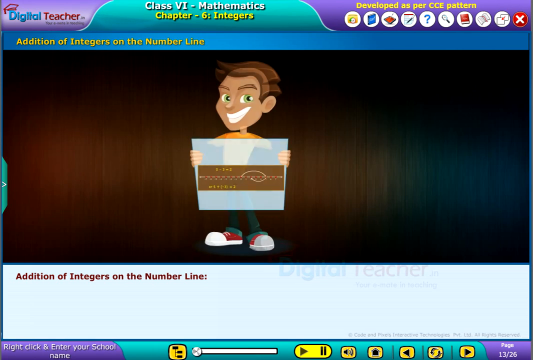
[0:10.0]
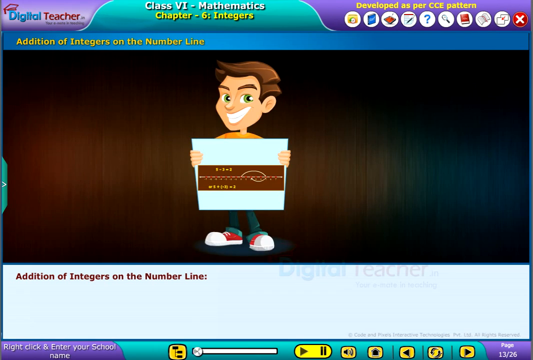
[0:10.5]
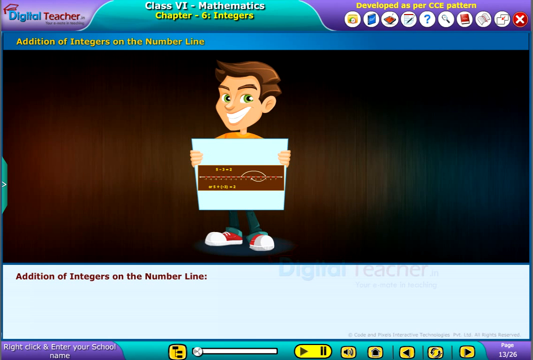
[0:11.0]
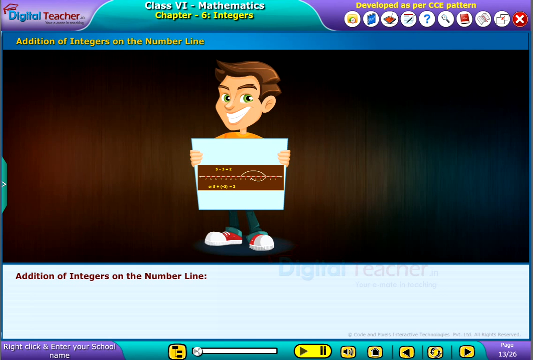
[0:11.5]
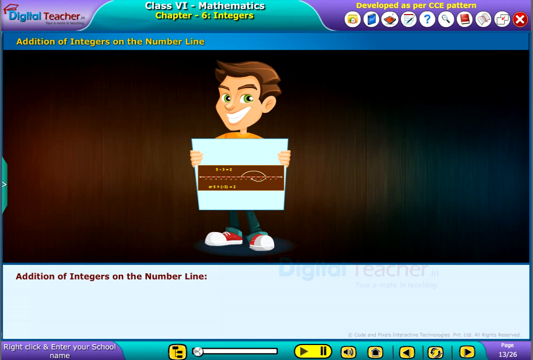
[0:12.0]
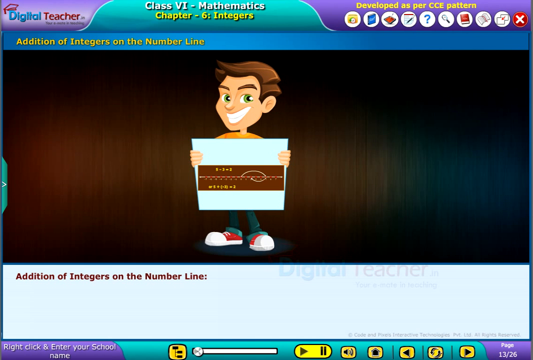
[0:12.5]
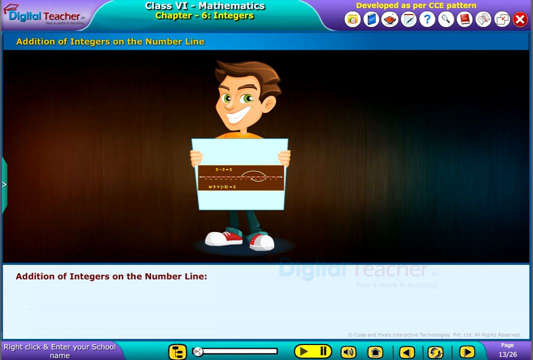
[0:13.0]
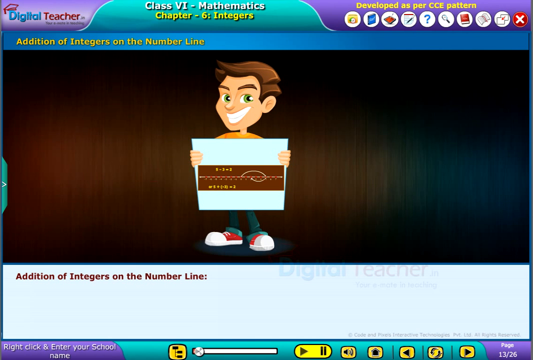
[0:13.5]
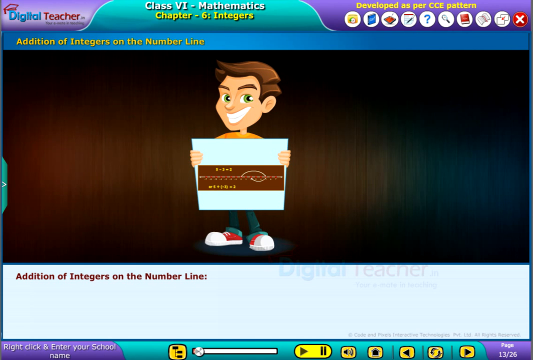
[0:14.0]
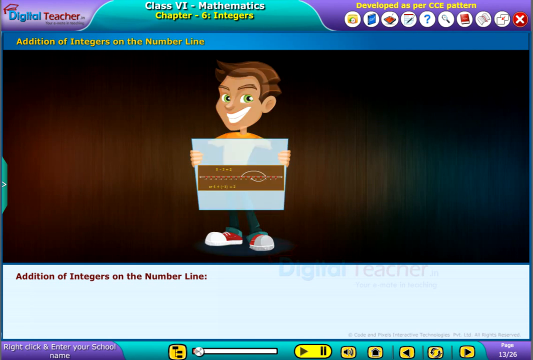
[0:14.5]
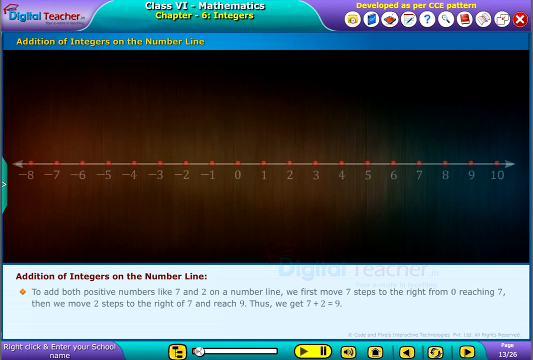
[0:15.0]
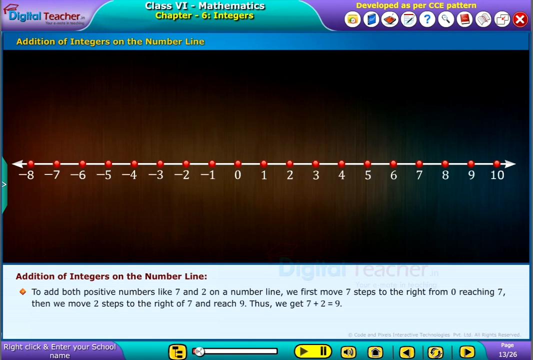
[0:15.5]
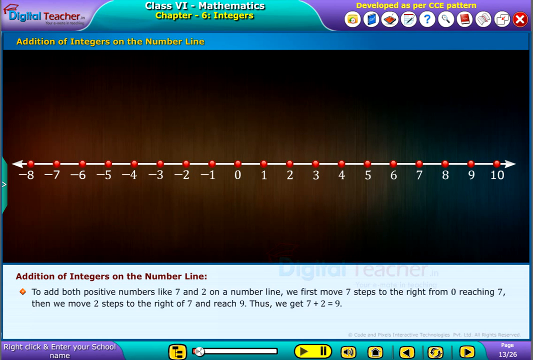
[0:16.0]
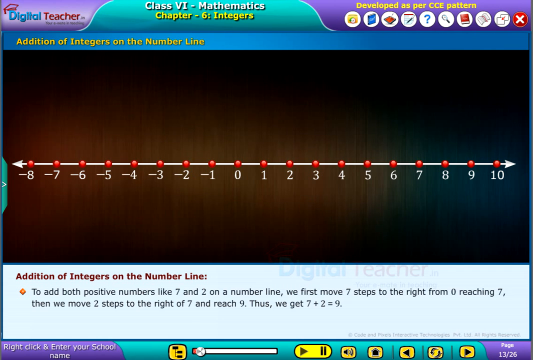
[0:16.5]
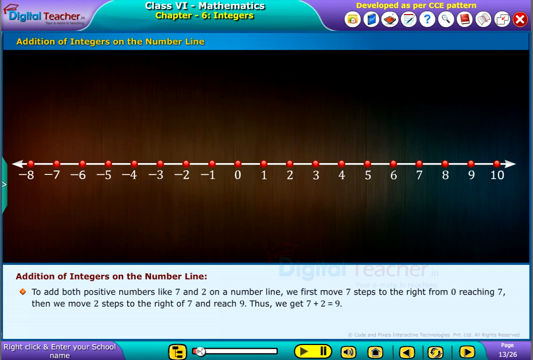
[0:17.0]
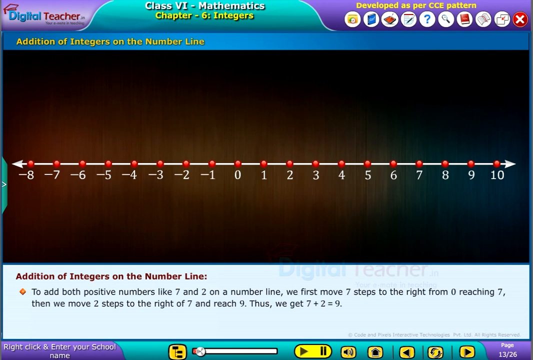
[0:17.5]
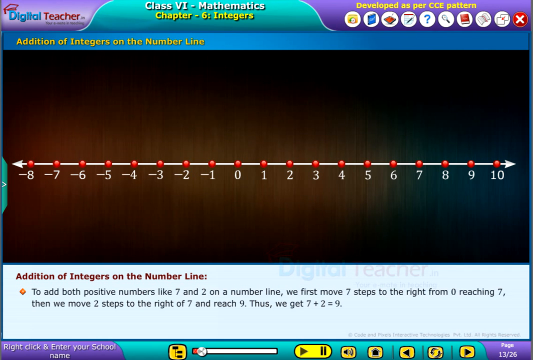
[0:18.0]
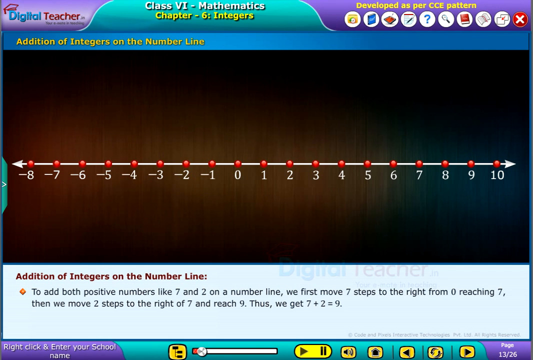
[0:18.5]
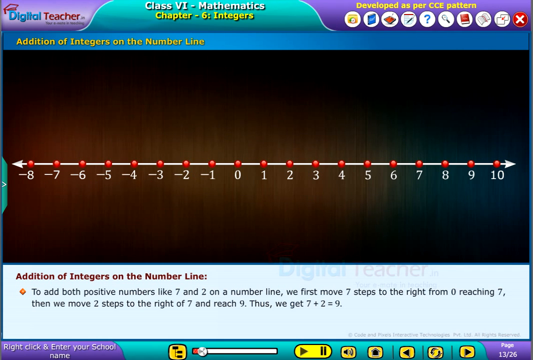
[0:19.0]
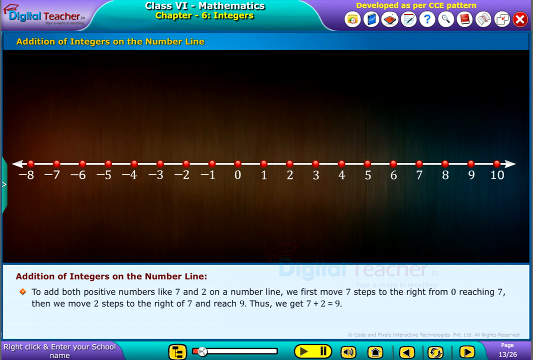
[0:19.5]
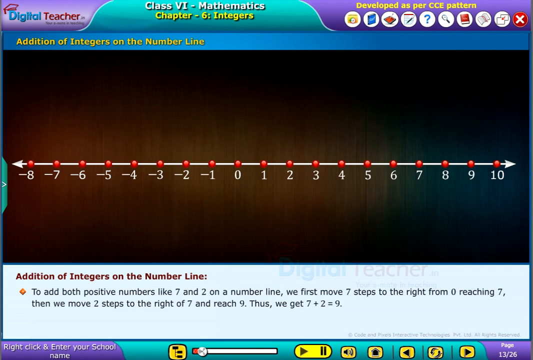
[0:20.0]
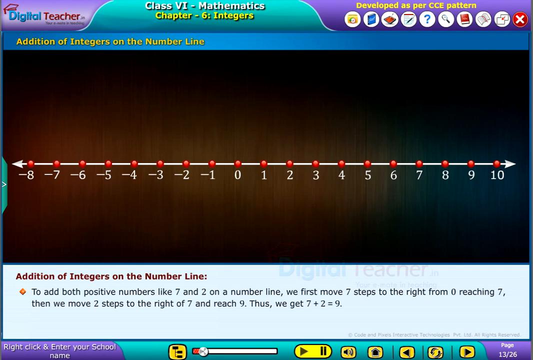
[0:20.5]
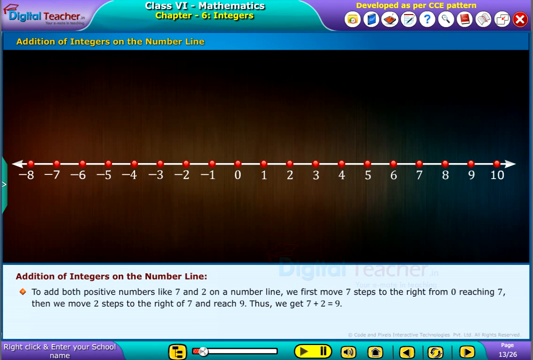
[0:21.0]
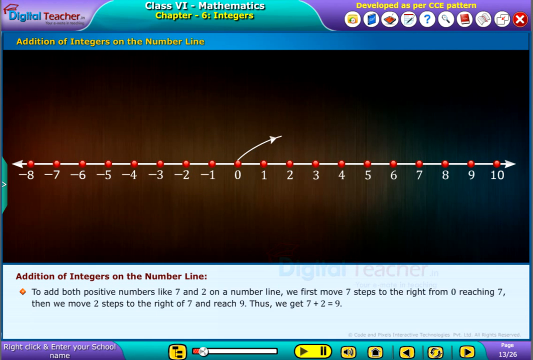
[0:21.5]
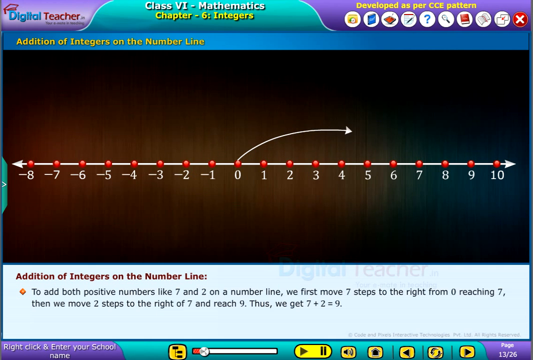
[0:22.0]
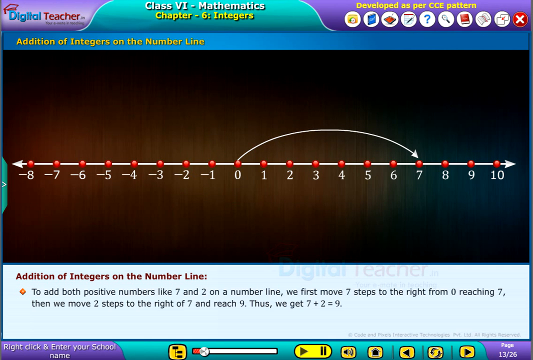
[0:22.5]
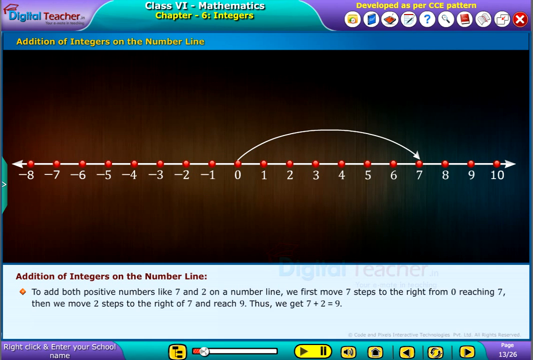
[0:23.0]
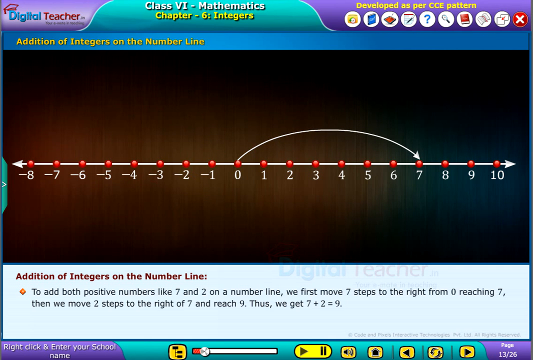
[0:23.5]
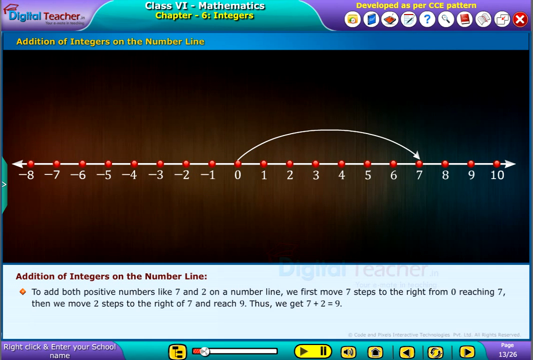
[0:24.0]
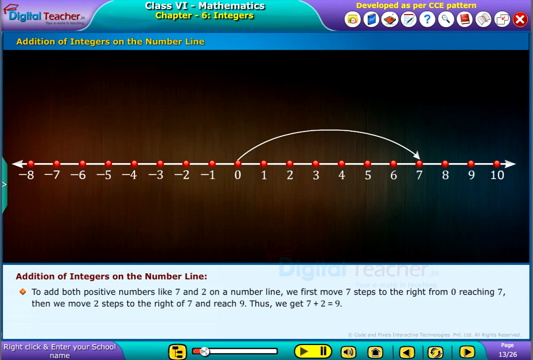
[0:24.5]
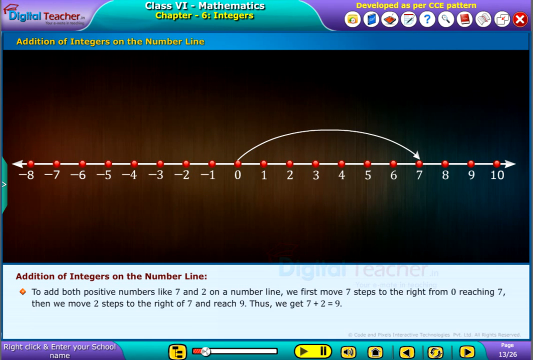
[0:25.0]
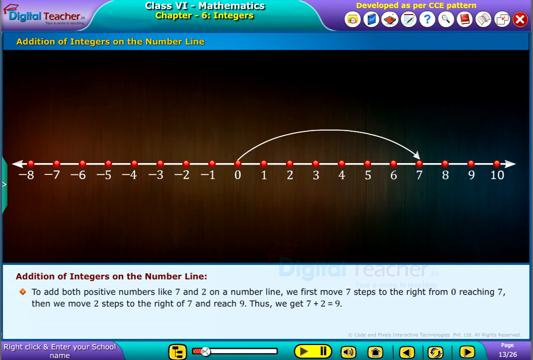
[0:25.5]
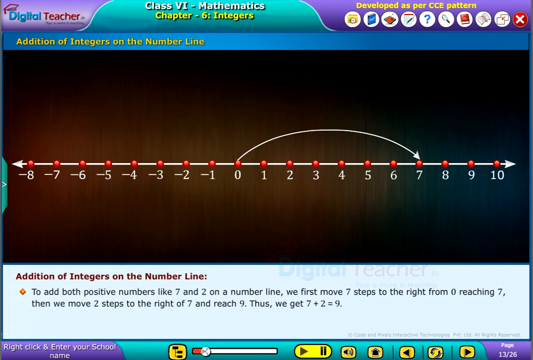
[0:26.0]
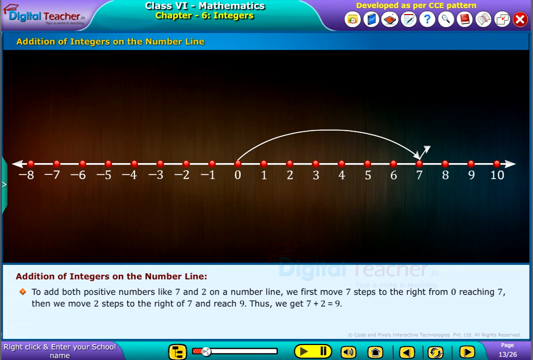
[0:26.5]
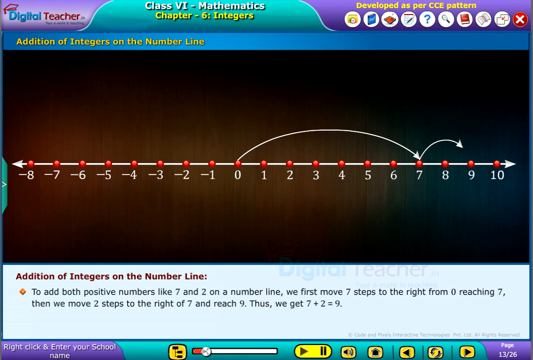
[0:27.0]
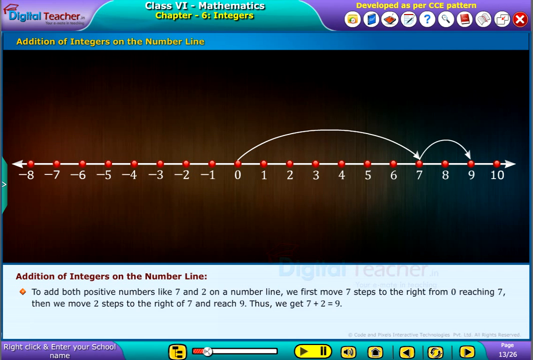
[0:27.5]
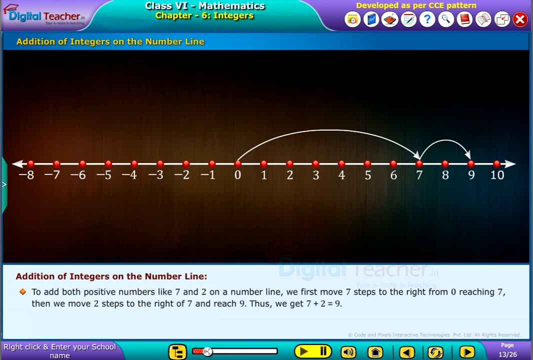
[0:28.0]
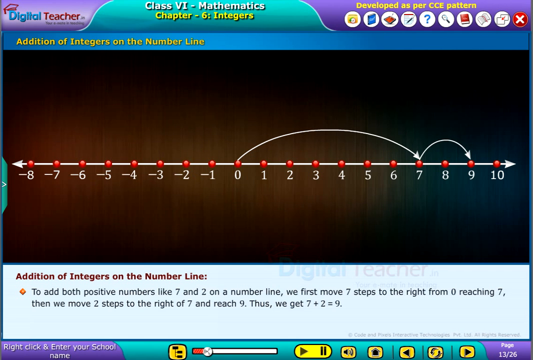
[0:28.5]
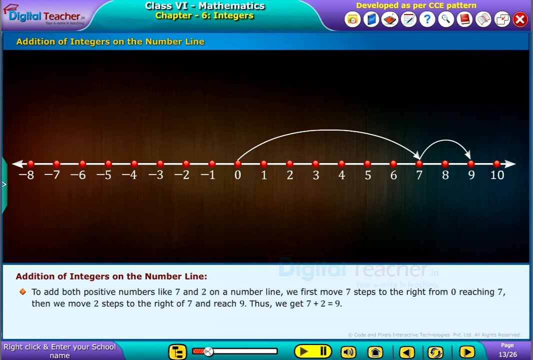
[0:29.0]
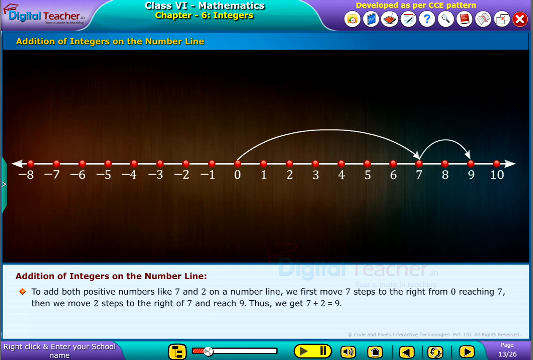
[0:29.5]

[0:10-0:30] The page for addition of integers on the number line appears, with a title at the top below the navigation bar in a blue banner with yellow text. The main content area has a black background with a very dark, rainbow-like gradient. In the middle, a boy holds up paper showing something like a number line, and text at the bottom says "addition of integers on the number line". The boy then disappears and is replaced by a number line ranging from negative eight to ten, and the text below now says "to add both positive integers like seven and two on the number line we first move seven steps to the right from zero reaching seven then we move two steps to the right of seven and reach nine thus we get seven plus two equals nine". An animated arrow goes from 0 to 7 and then jumps from 7 to 9.